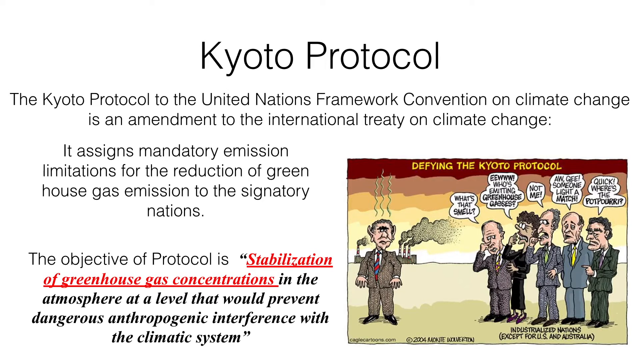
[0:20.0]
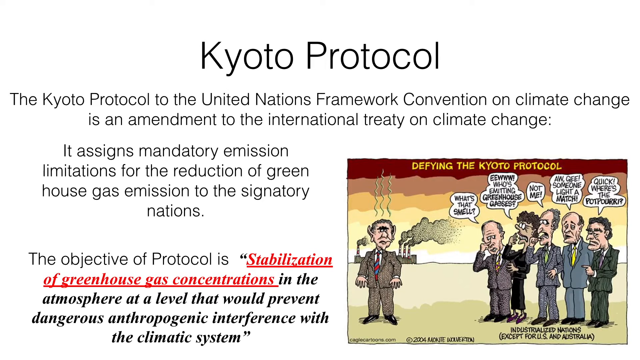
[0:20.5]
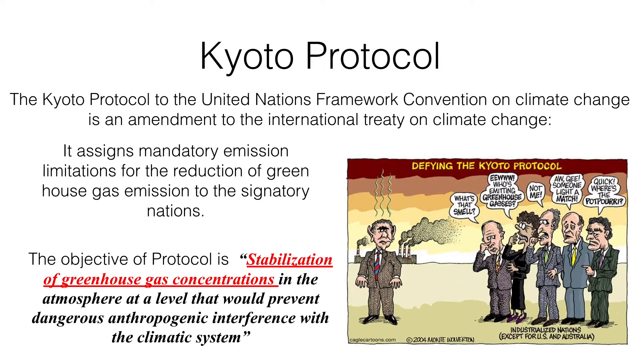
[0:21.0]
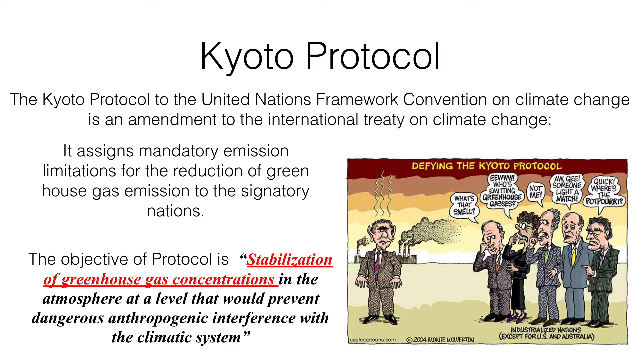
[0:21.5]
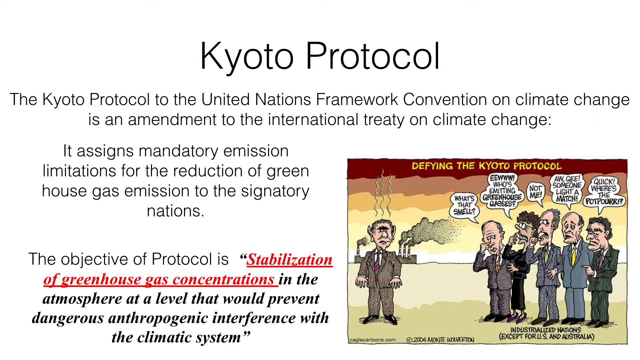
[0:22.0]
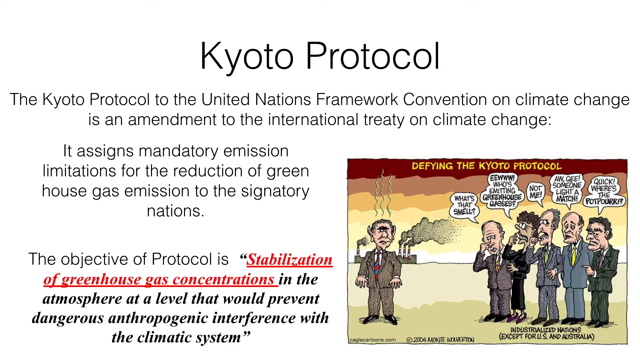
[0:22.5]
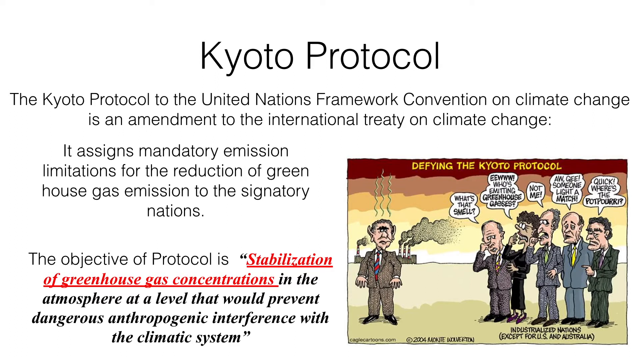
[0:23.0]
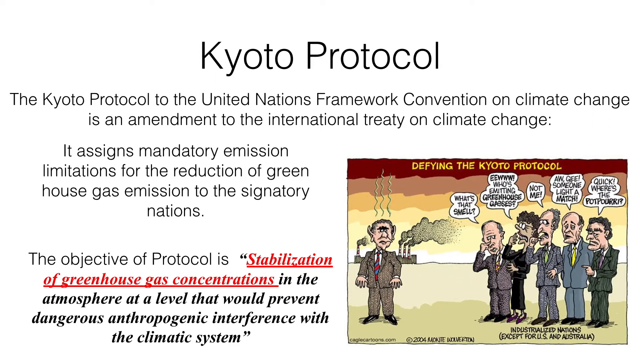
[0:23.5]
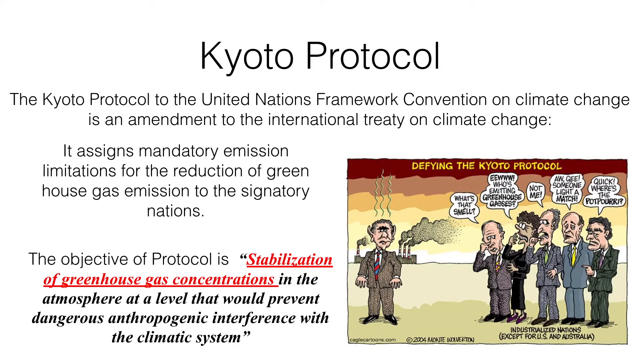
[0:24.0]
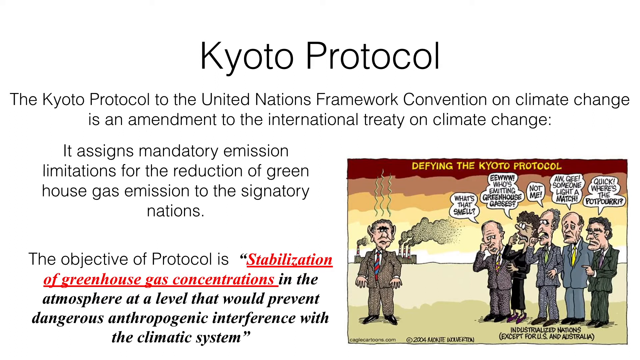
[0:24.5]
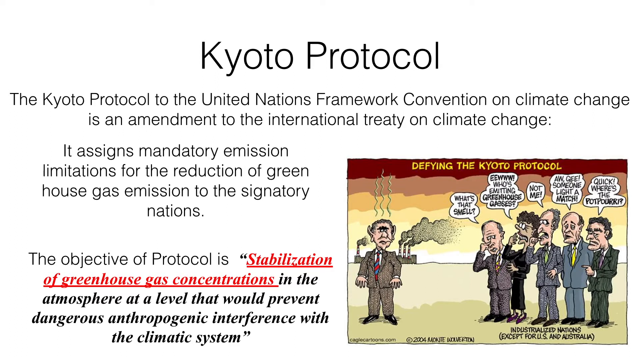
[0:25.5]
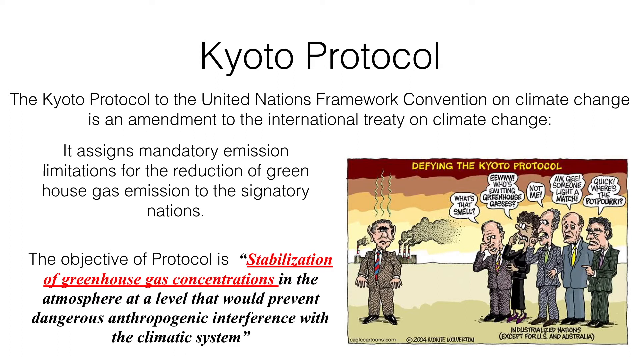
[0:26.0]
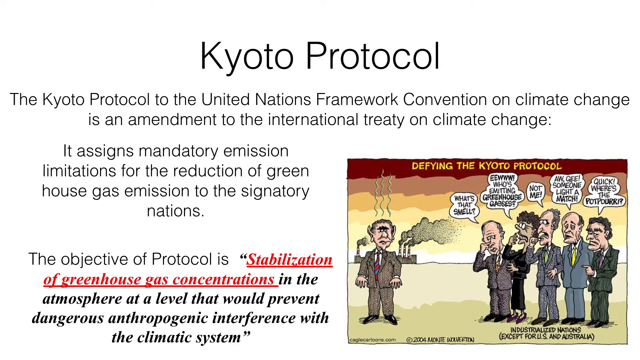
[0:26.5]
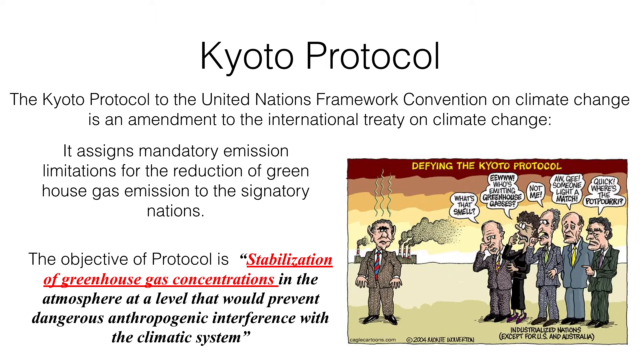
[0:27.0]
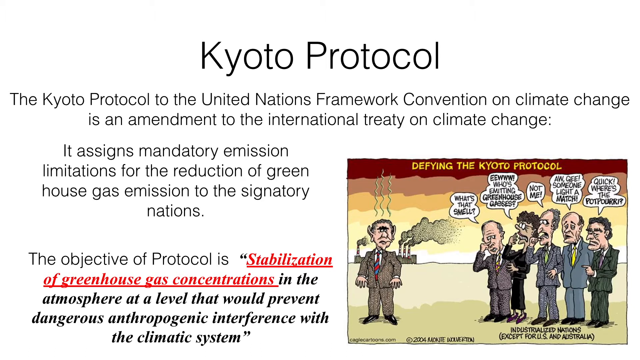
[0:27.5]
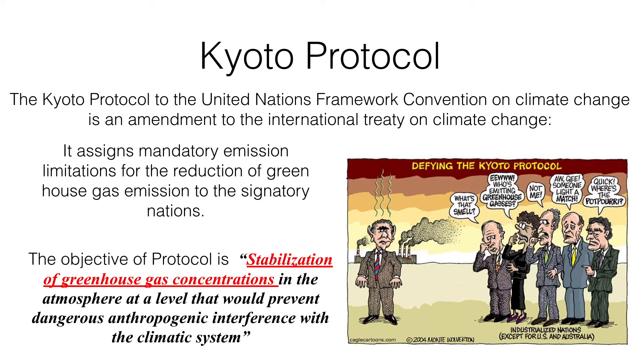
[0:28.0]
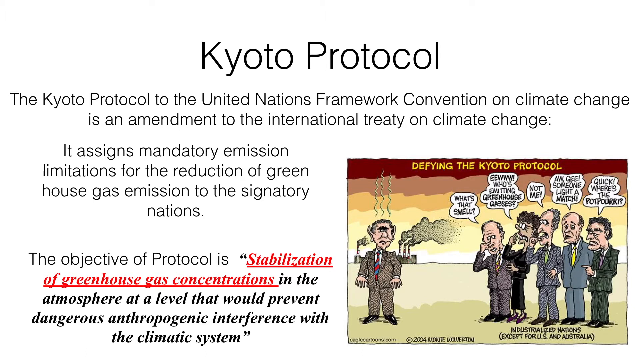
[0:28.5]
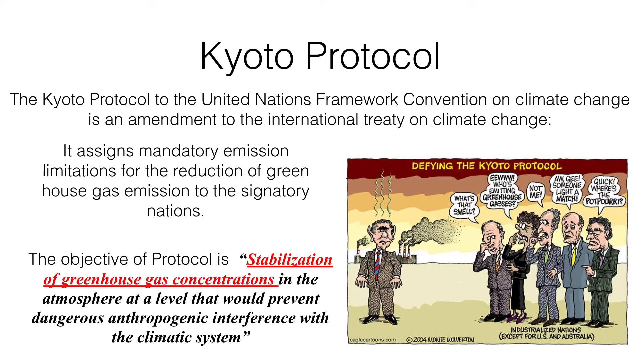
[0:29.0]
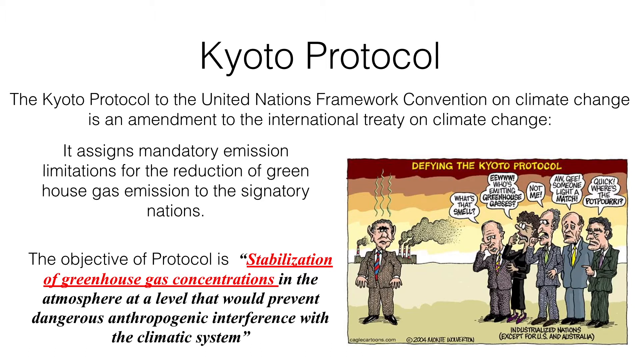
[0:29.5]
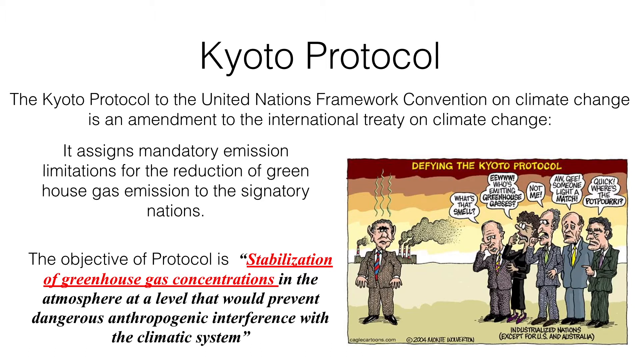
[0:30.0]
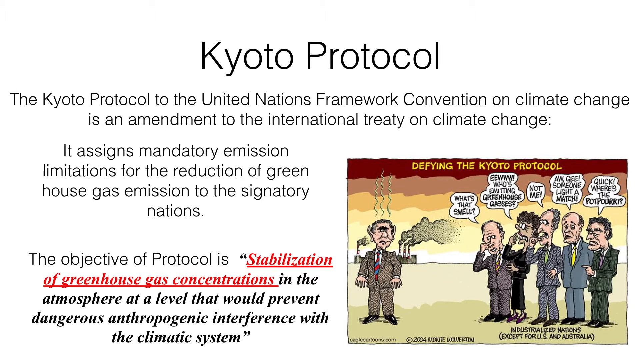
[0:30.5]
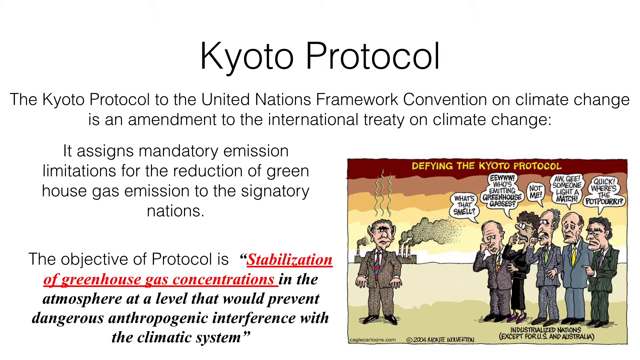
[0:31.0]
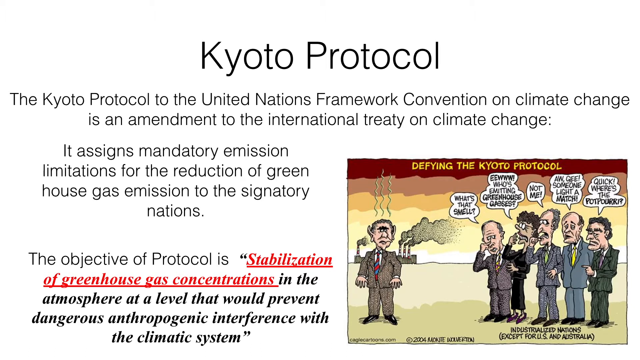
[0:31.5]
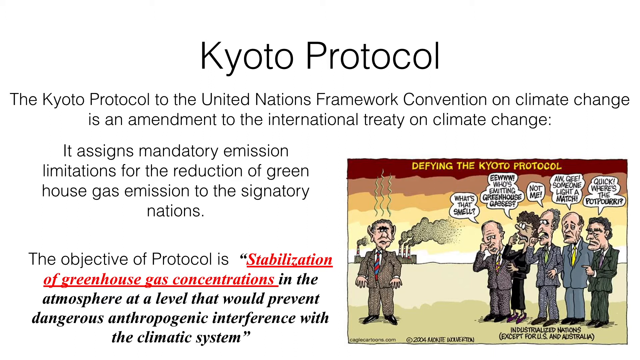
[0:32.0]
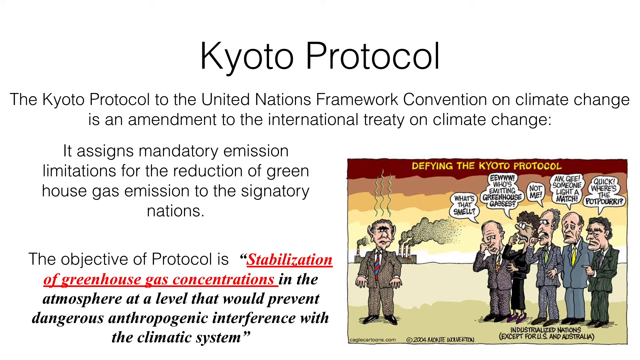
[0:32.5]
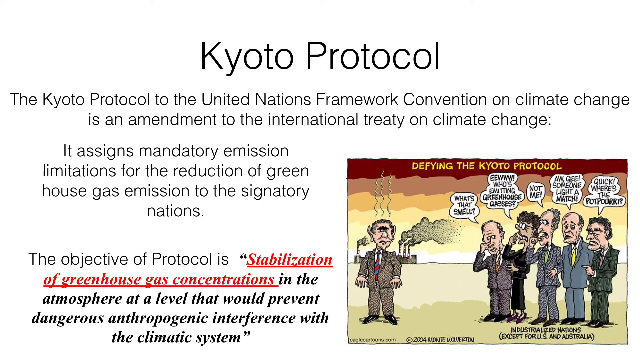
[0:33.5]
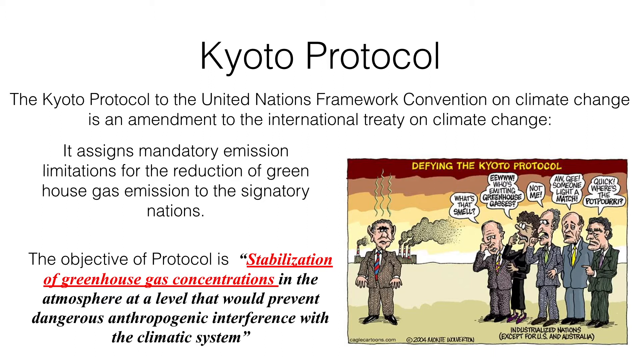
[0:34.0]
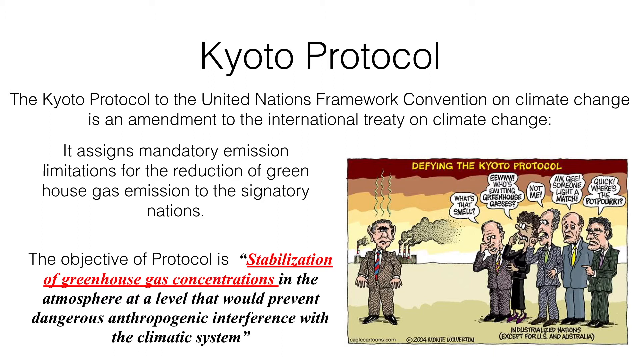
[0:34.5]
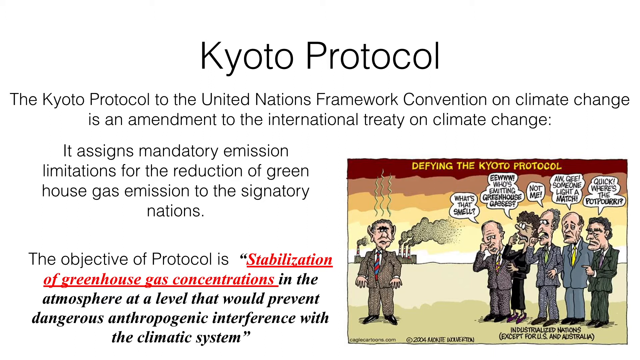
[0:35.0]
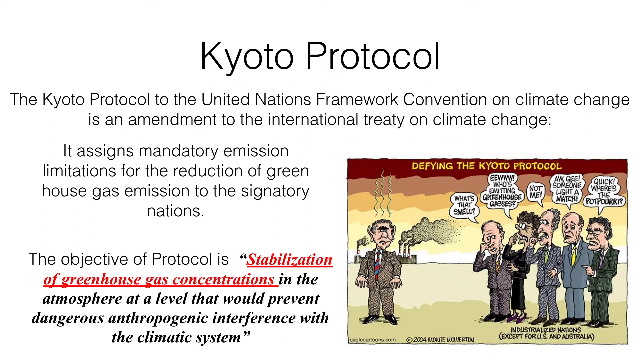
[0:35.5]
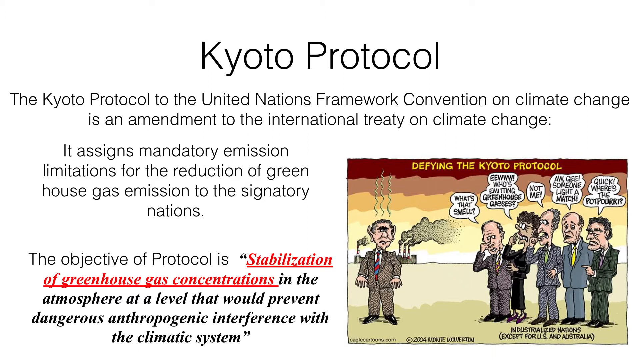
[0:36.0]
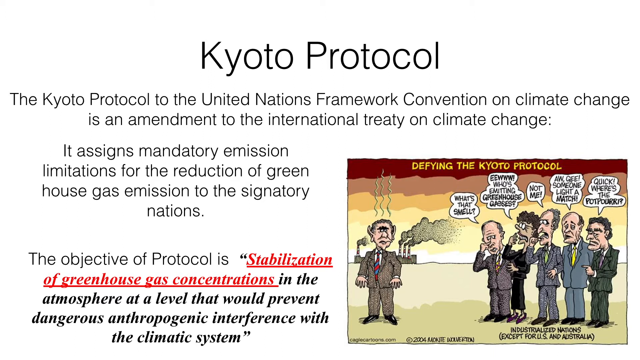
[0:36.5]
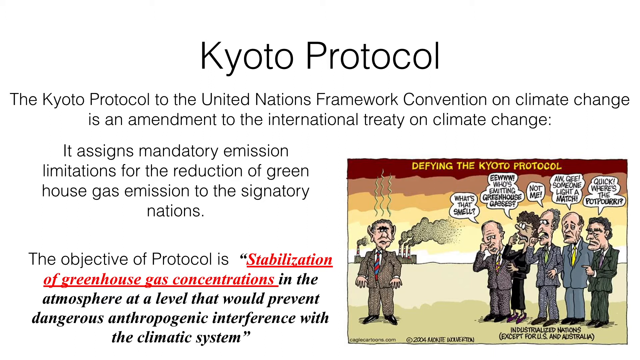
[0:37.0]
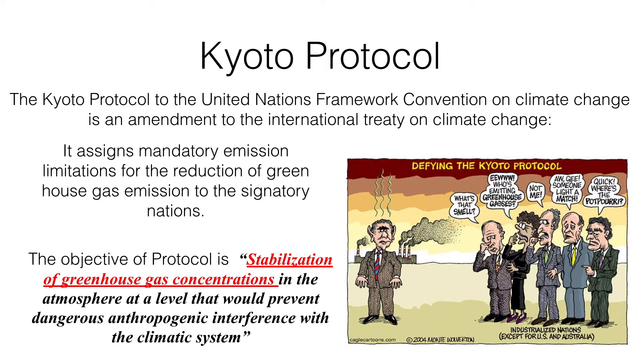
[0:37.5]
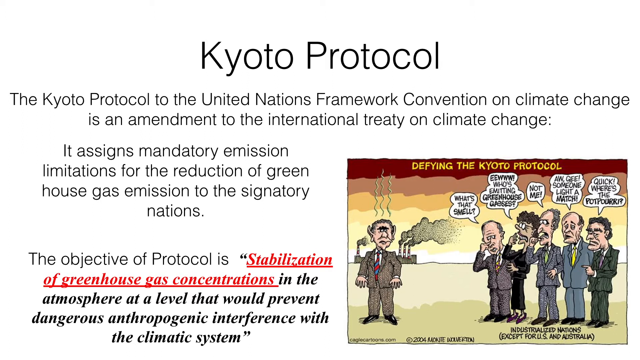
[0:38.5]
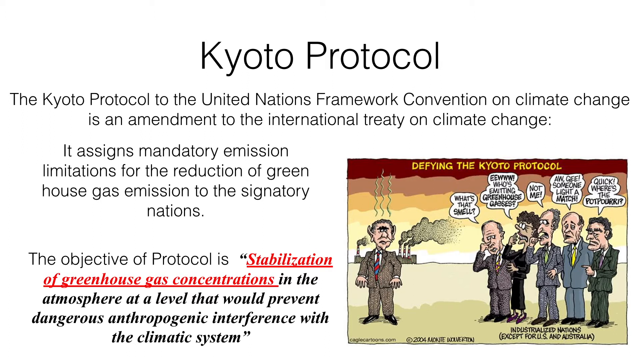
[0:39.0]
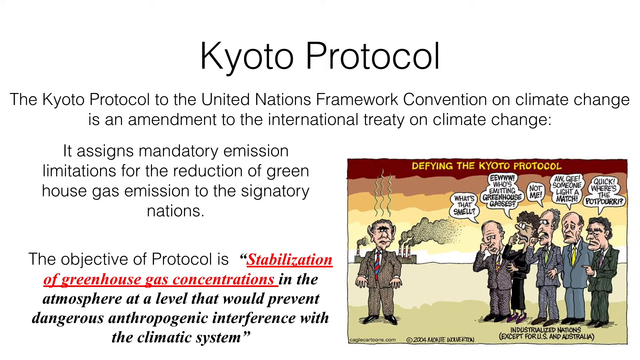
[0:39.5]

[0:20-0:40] A page from what looks like a website has a header reading "Kyoto Protocol," with text that reads: "The Kyoto Protocol to the United Nations Framework Convention on climate change is an amendment to the International Treaty on climate change. It assigns mandatory emission limitations for the reduction of greenhouse gas emission to the signatory nations. The objective of Protocol is stabilization of greenhouse gas concentrations in the atmosphere at a level that would prevent dangerous anthropogenic interference with the climatic system." On the lower right of the page is a political cartoon showing a group of five people standing on the right, identified underneath as "industrialized nations (except for U.S. and Australia)." Each of them is holding their nose, and text bubbles above them read things like "What's that smell?" and "Quick, where's the potpourri?" On the left side of the cartoon, a man in a suit is standing in front of two factories that look like they are emitting smoke and pollution. At the top of the cartoon it reads "Defying the Kyoto Protocol."